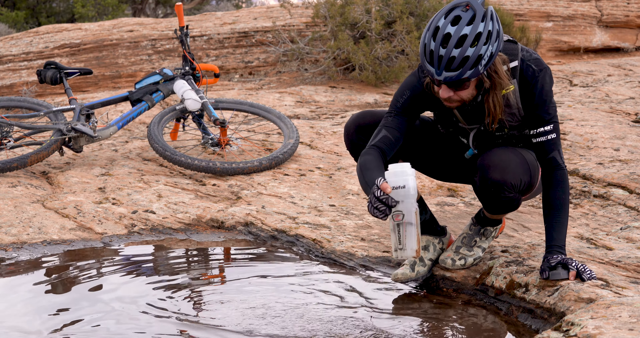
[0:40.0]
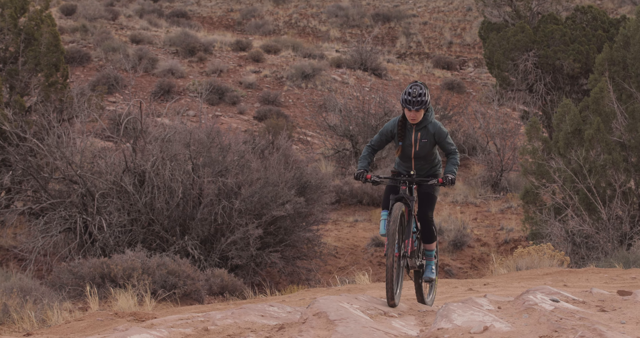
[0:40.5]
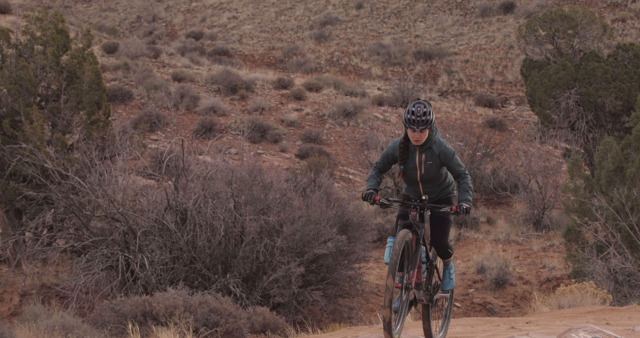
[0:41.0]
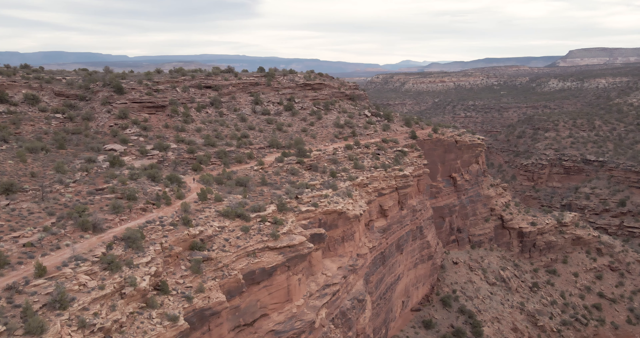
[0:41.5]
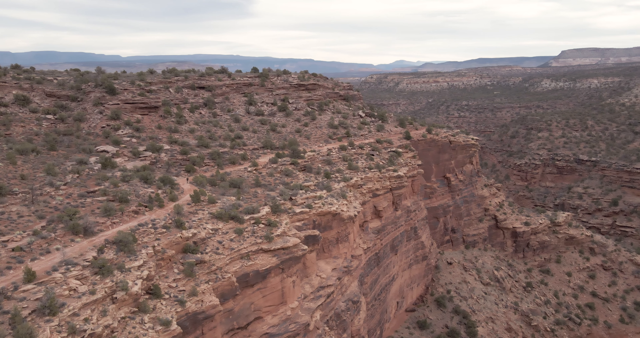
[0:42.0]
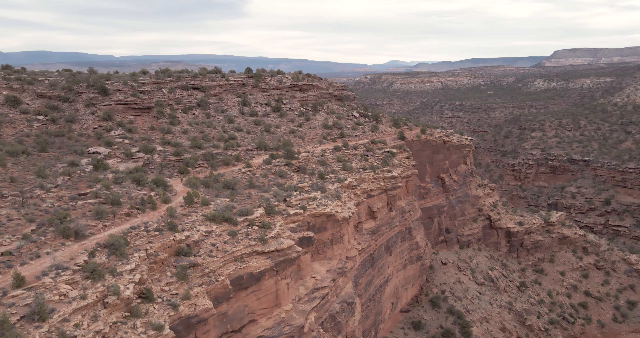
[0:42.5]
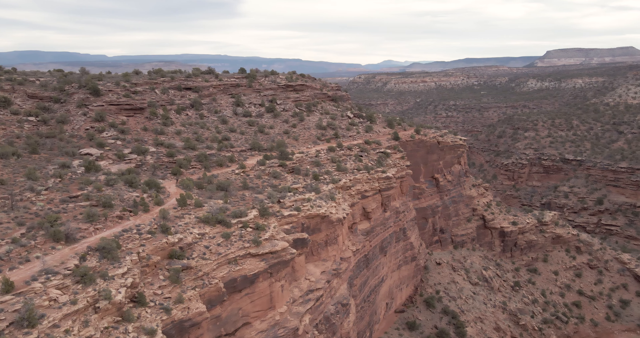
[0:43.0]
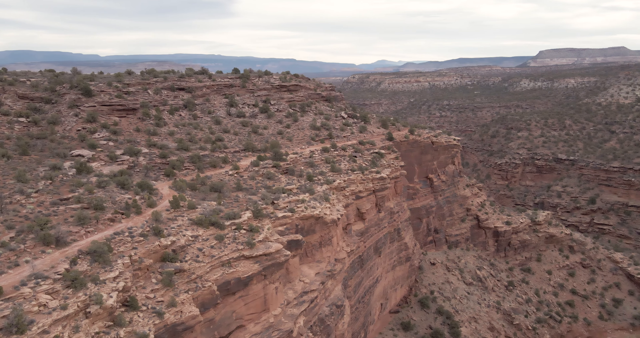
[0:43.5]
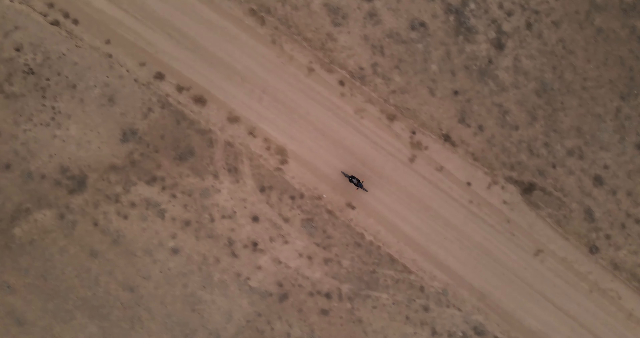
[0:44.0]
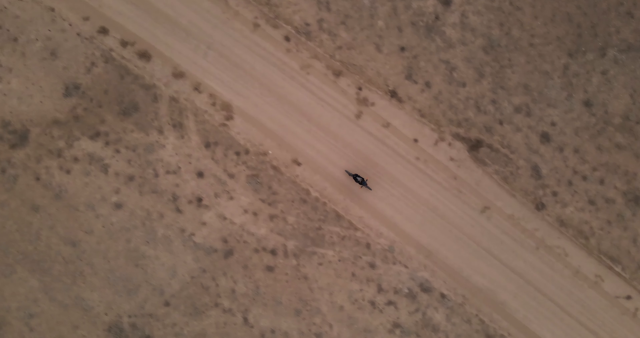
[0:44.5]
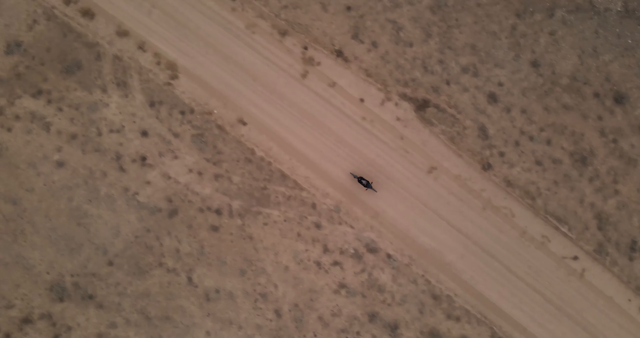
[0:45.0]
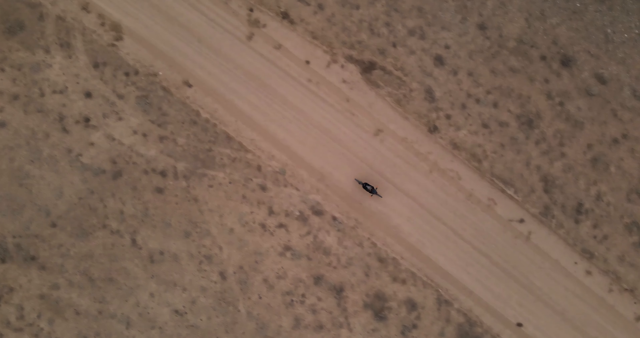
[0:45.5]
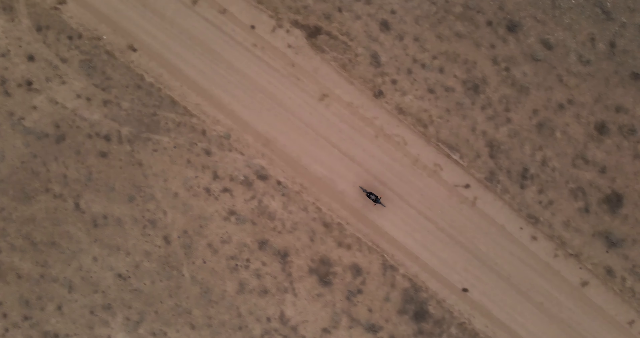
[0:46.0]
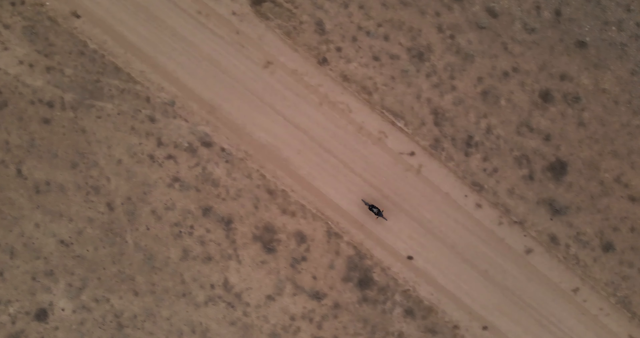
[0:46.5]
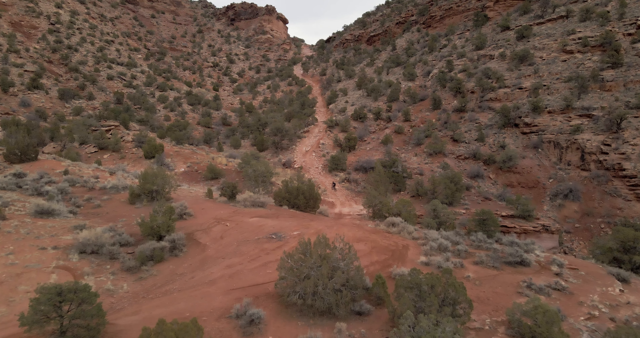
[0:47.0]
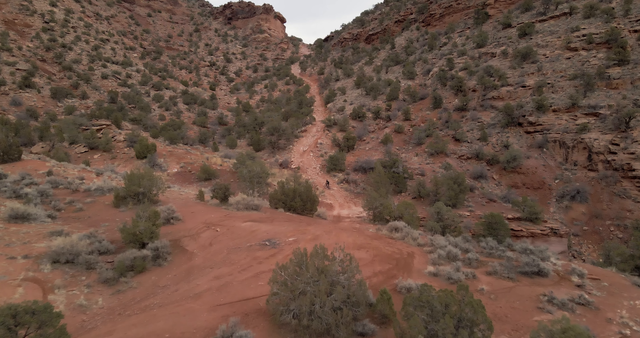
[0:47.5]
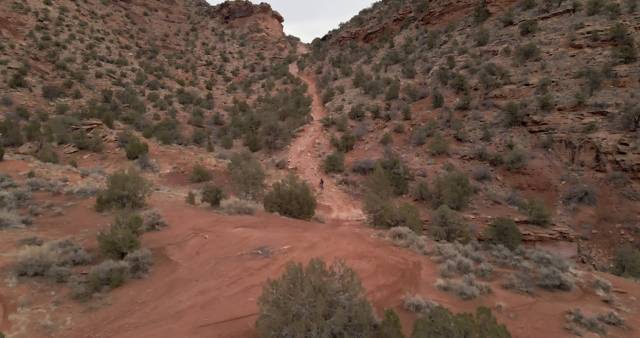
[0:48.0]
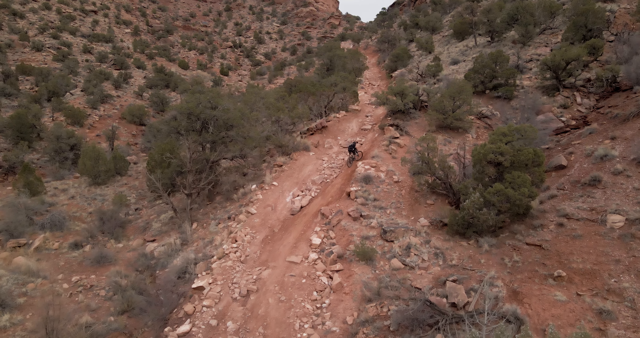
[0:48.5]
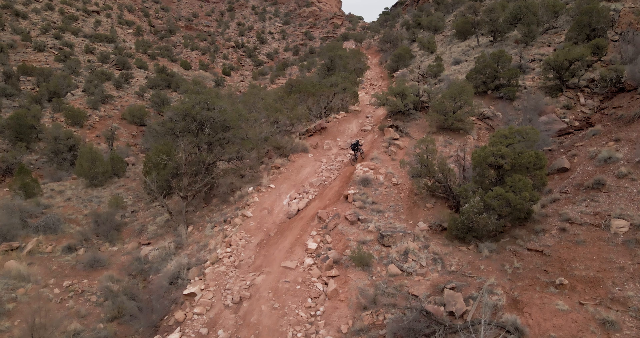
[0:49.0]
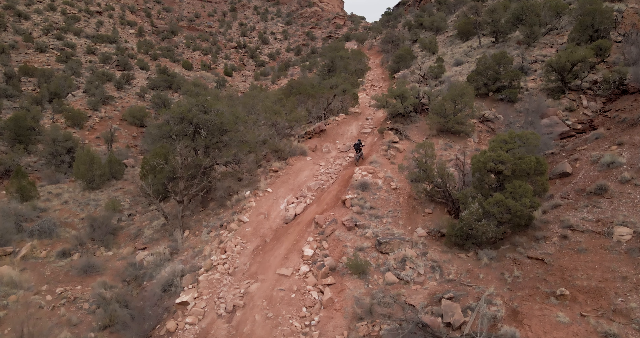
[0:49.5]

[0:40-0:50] A cycle rider rides his cycle from the land to the hill. The person then collects water from the pond with his bottle. Two individuals appear: a man and a boy who is riding the cycle.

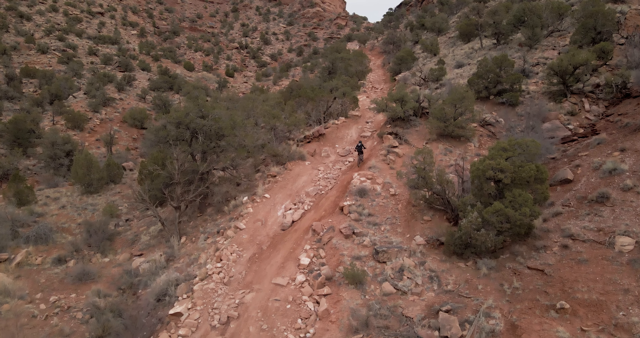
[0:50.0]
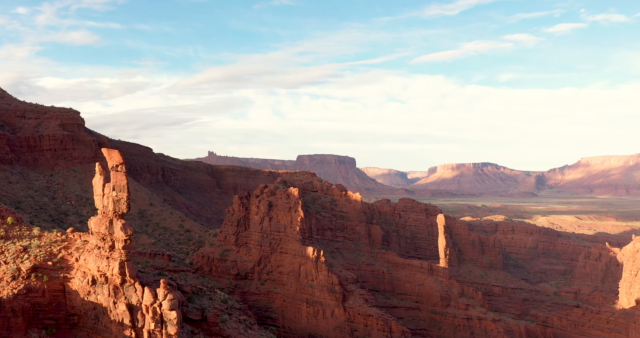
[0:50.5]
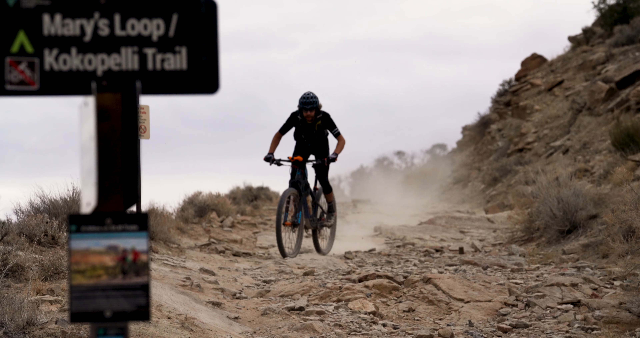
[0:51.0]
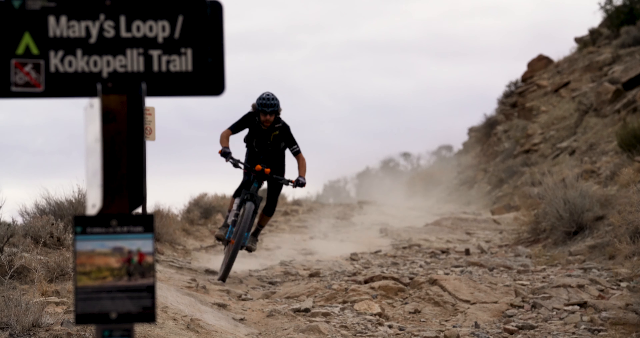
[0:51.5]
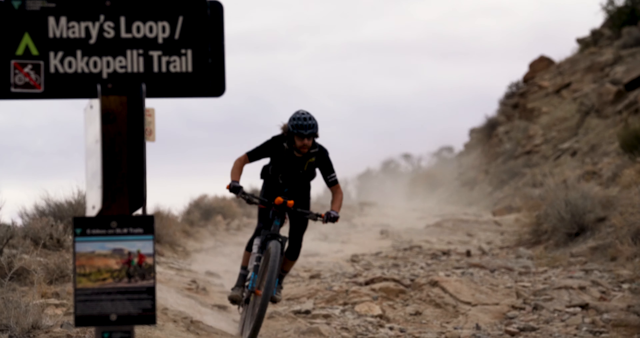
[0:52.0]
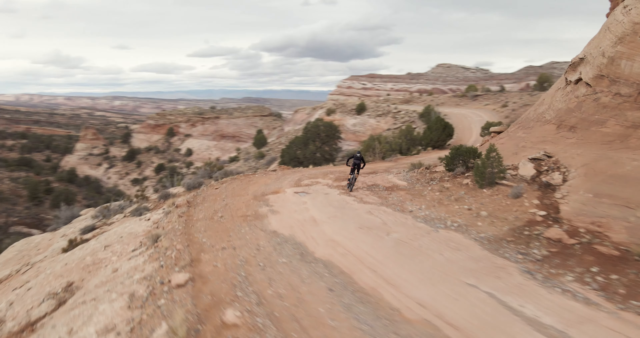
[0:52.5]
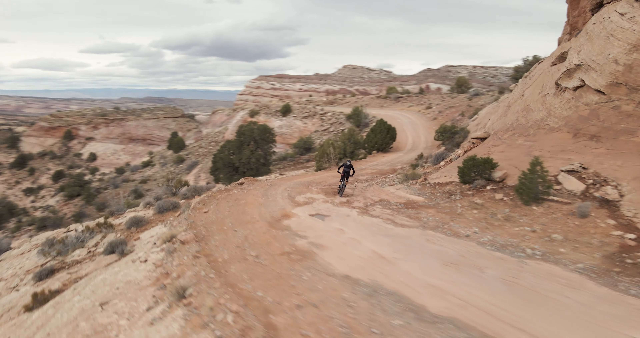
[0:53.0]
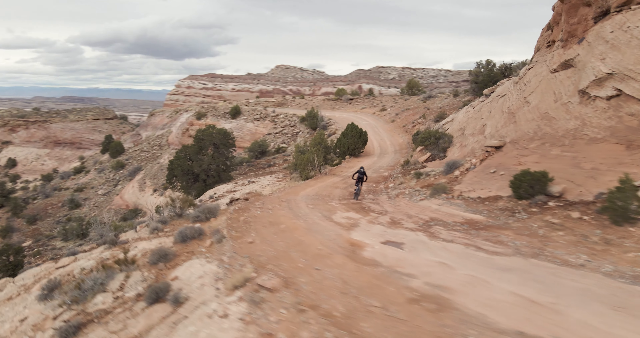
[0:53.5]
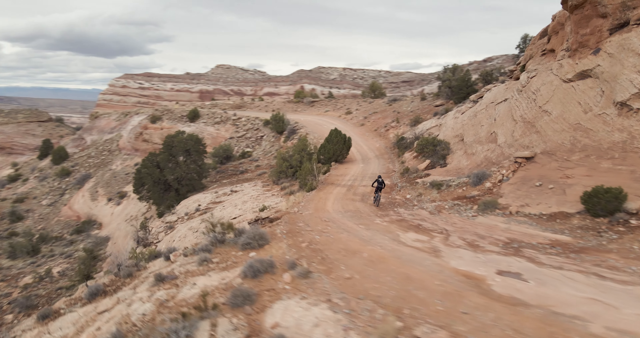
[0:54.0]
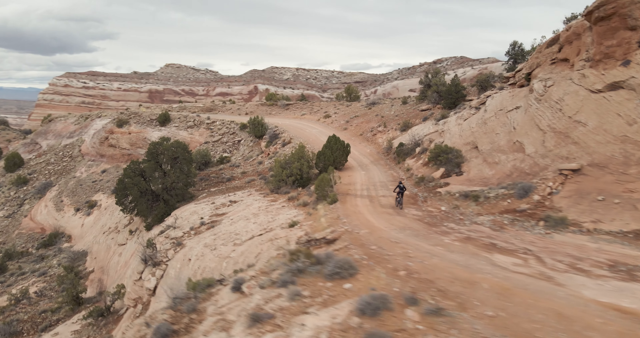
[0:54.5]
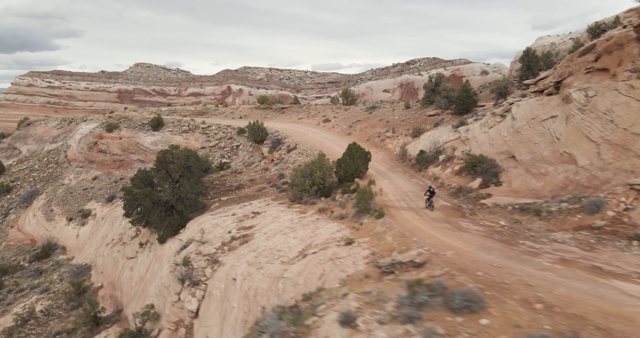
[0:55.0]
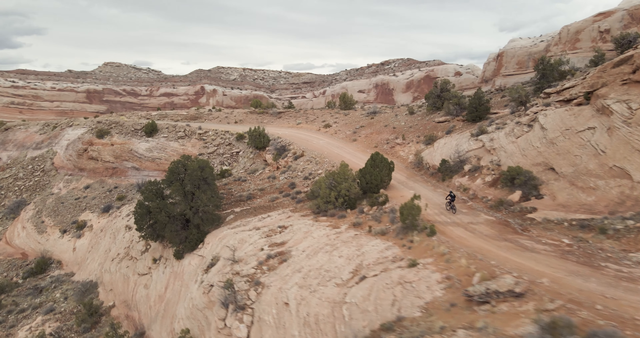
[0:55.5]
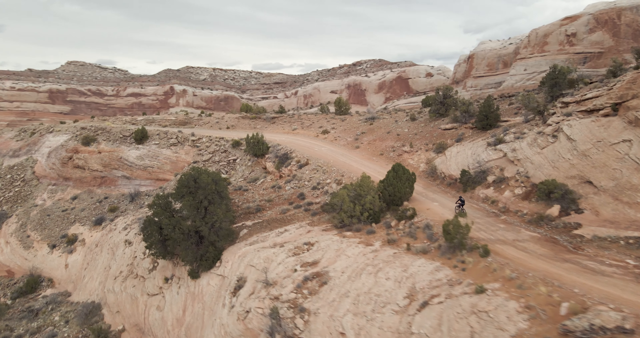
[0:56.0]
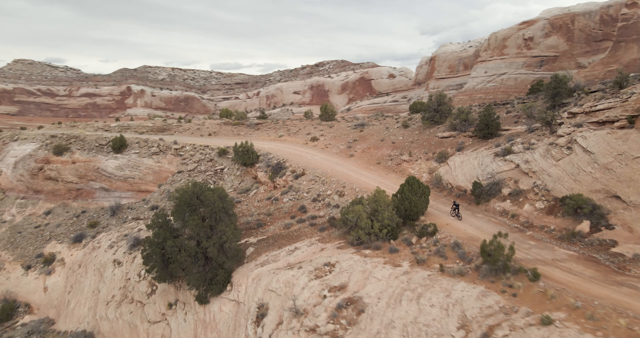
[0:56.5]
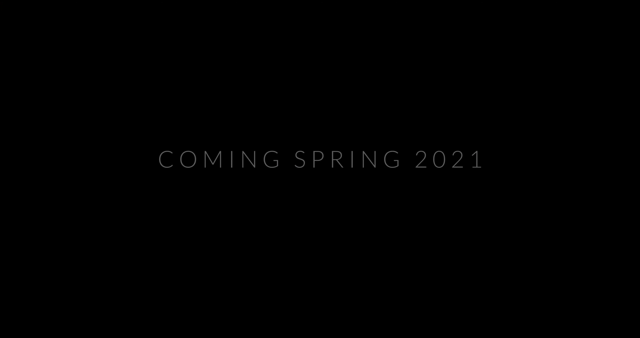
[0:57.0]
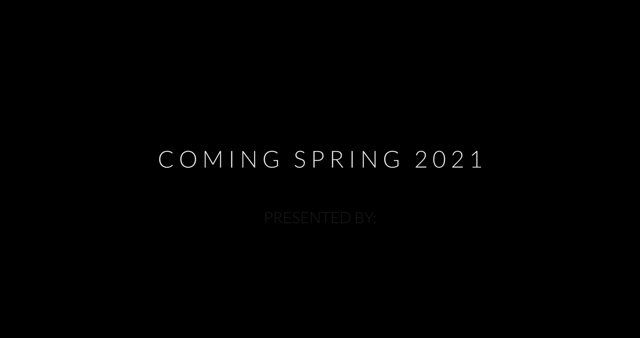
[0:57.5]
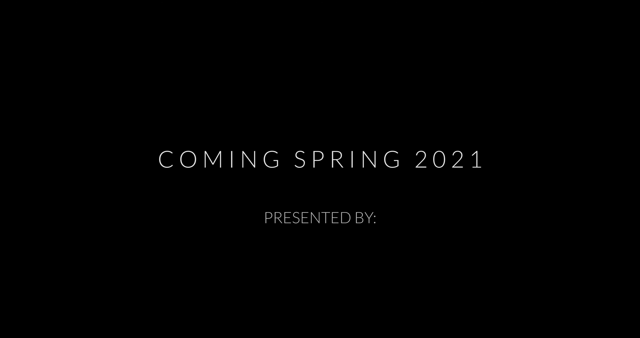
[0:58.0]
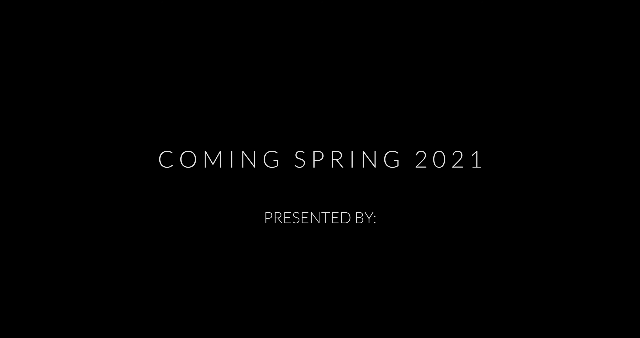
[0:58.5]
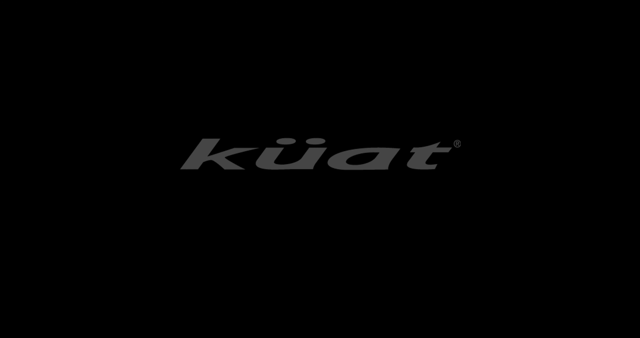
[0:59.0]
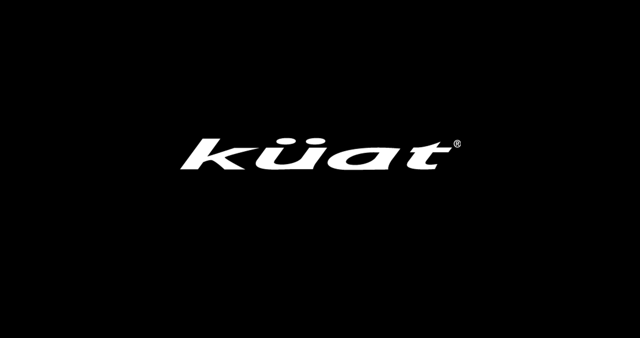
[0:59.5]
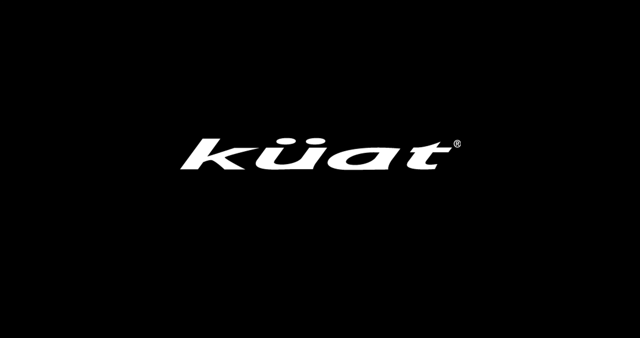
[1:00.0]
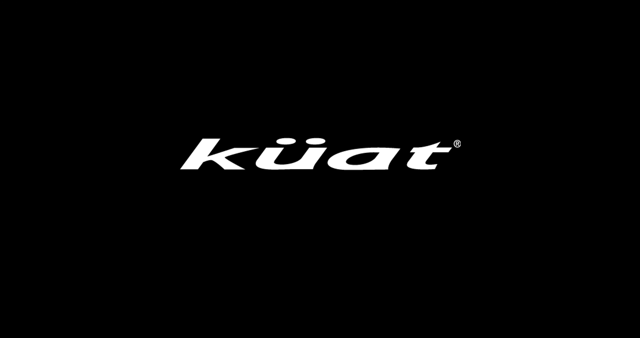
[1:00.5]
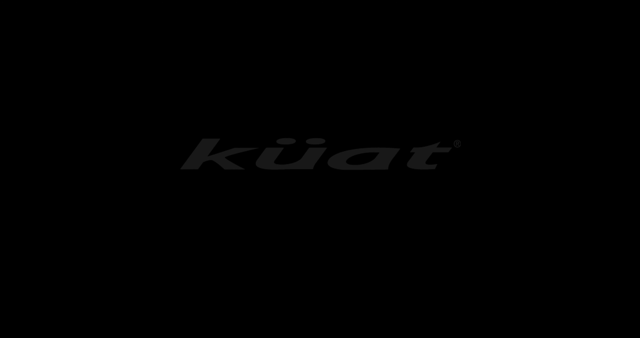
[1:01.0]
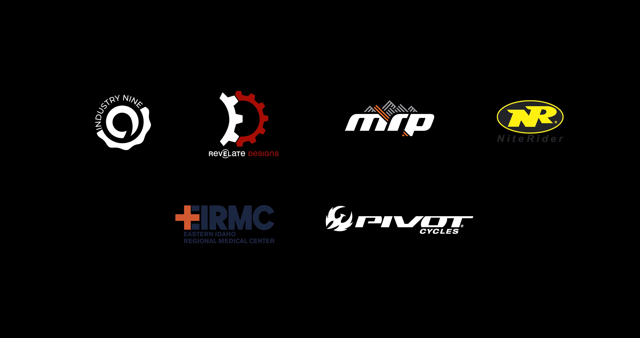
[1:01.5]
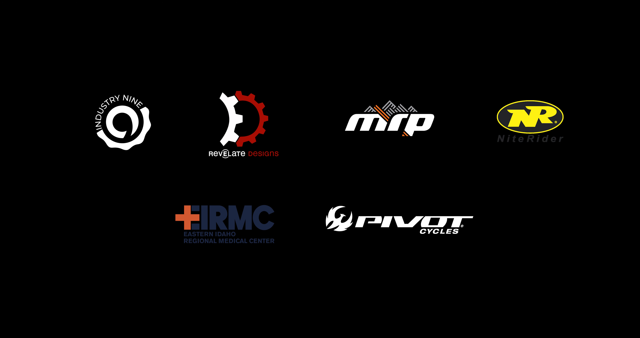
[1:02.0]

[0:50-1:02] A person rides a cycle along a dangerous roadside on the hill. Afterward, many logos from different companies appear, along with text such as "Coming spring 2021" and "Kuwait MRT".